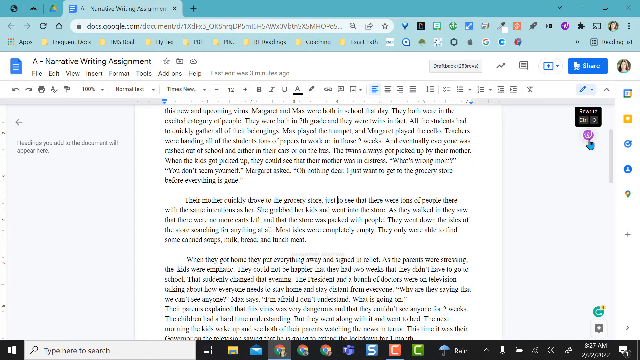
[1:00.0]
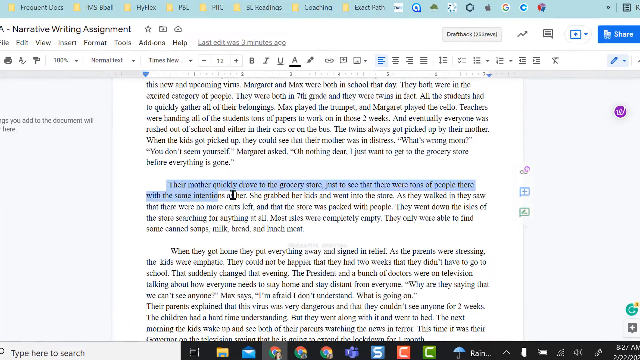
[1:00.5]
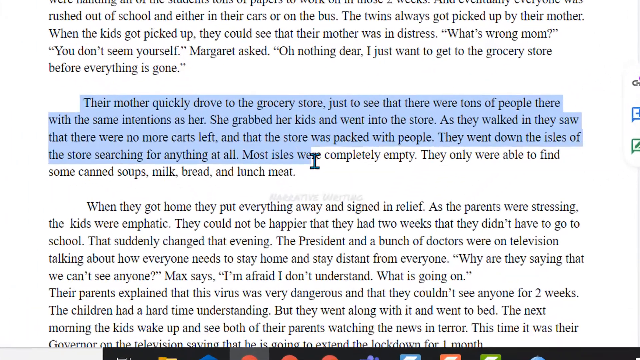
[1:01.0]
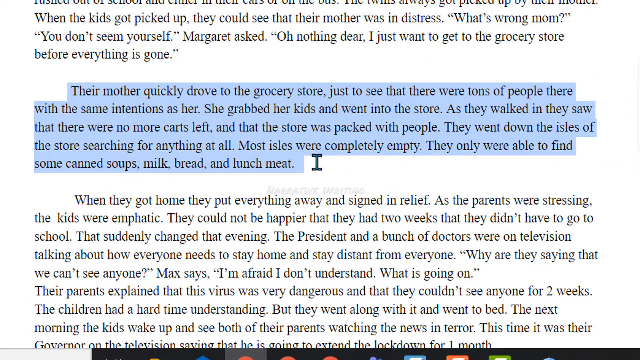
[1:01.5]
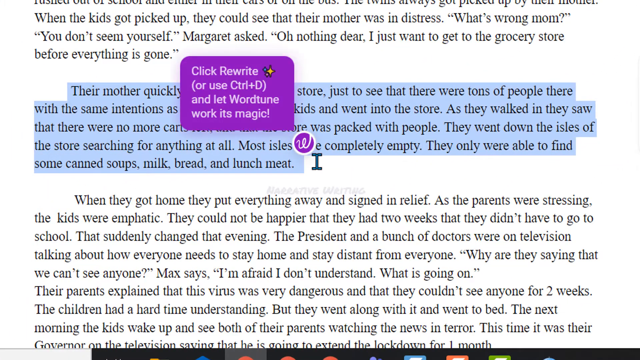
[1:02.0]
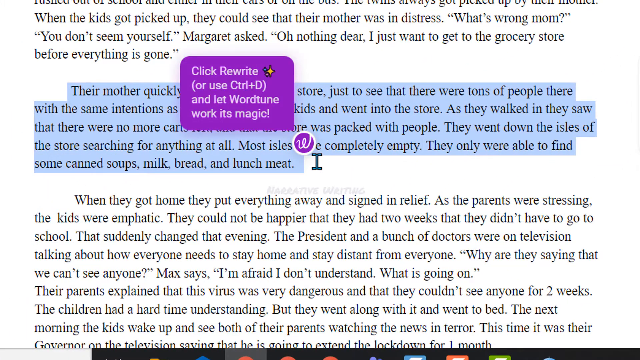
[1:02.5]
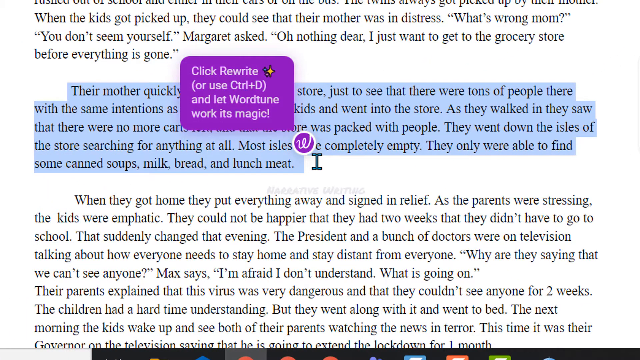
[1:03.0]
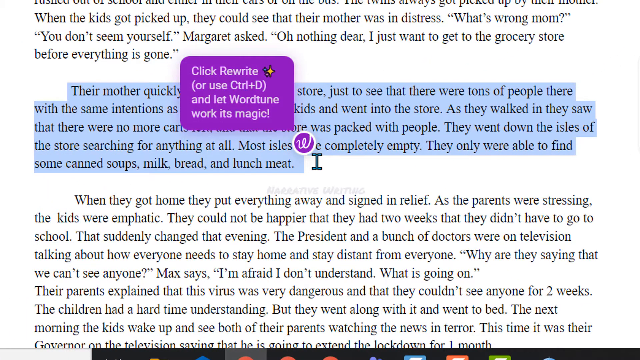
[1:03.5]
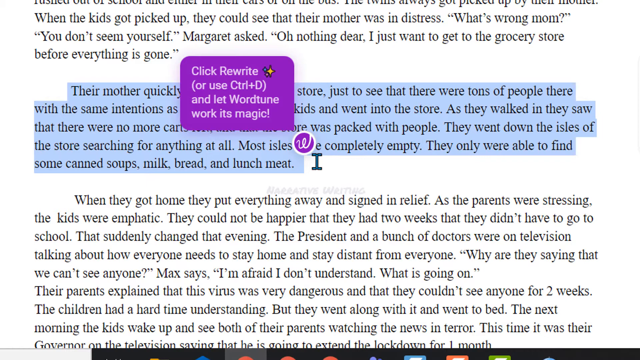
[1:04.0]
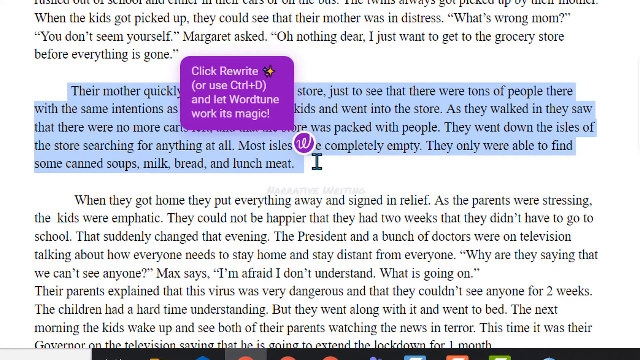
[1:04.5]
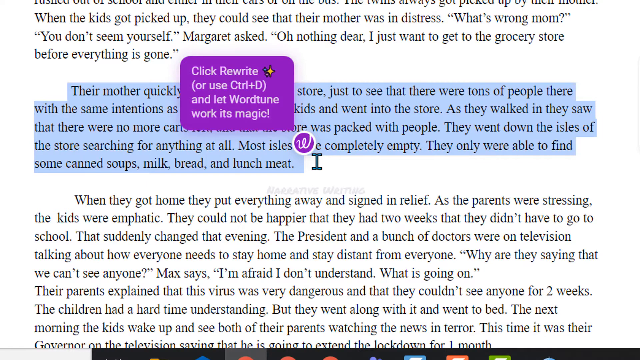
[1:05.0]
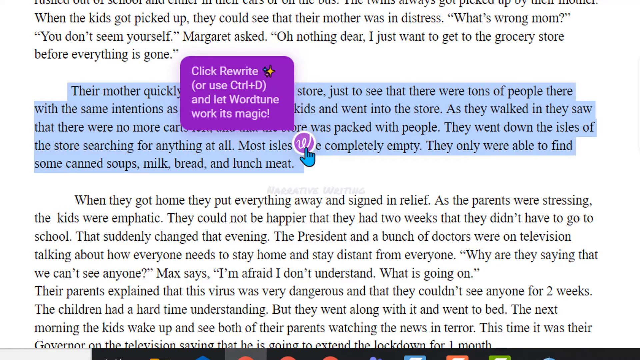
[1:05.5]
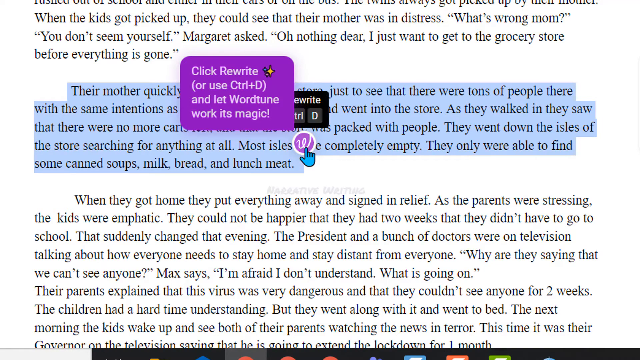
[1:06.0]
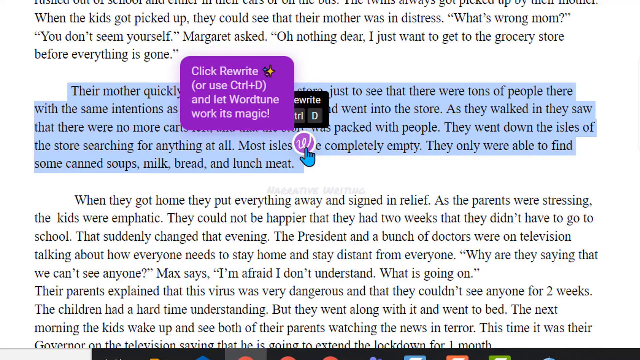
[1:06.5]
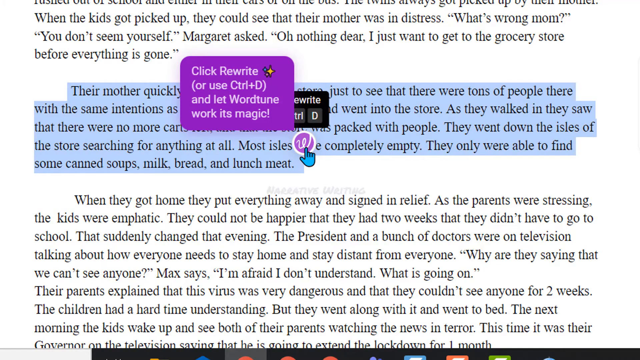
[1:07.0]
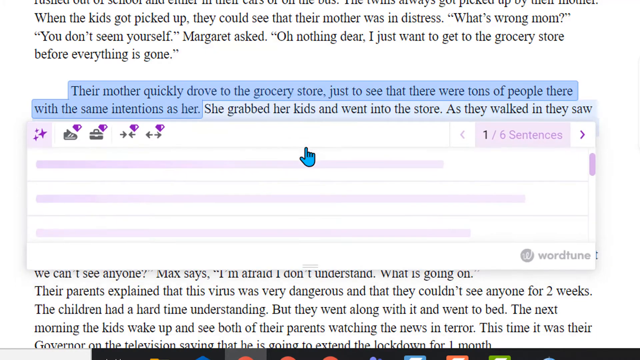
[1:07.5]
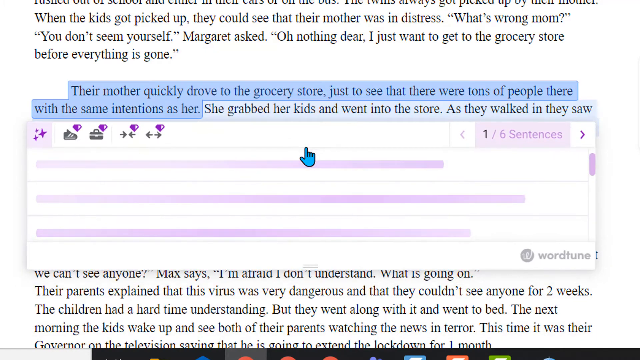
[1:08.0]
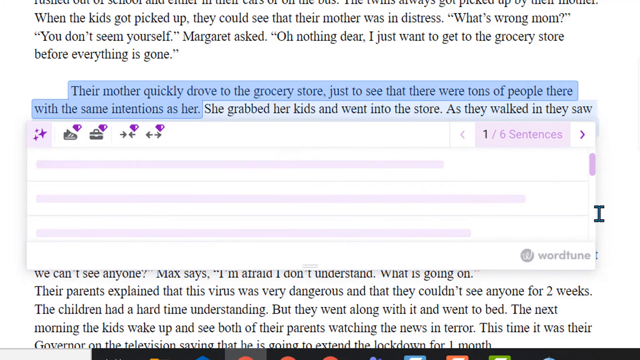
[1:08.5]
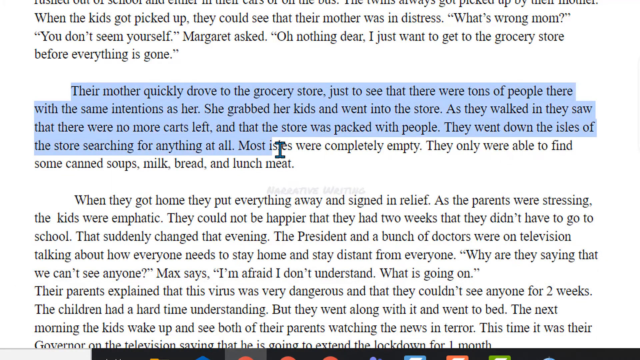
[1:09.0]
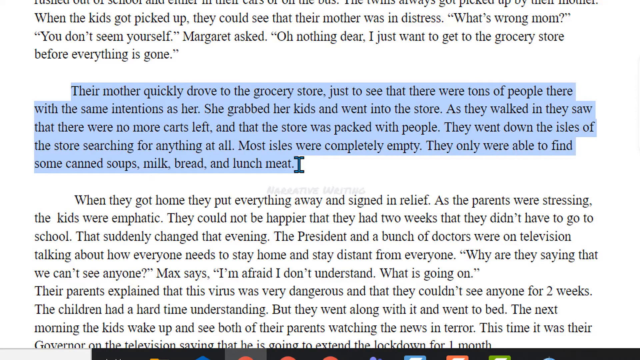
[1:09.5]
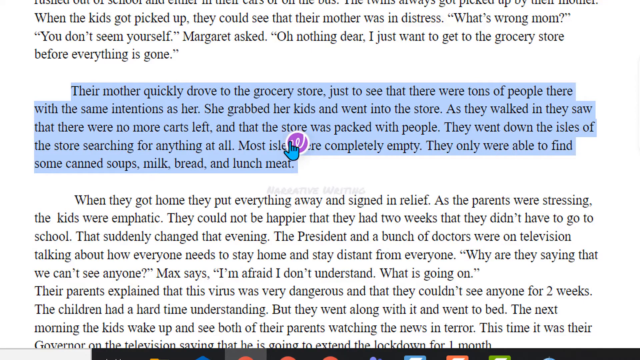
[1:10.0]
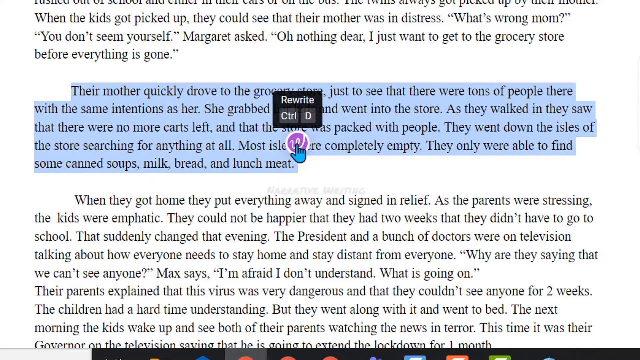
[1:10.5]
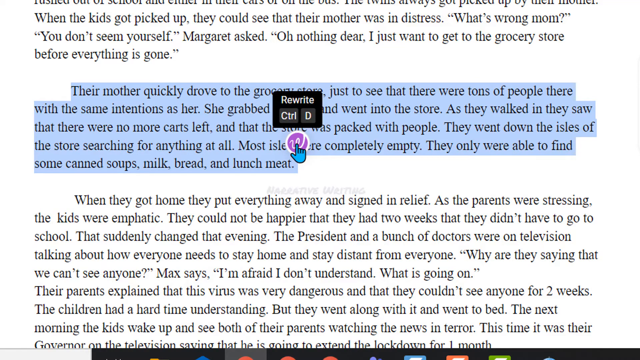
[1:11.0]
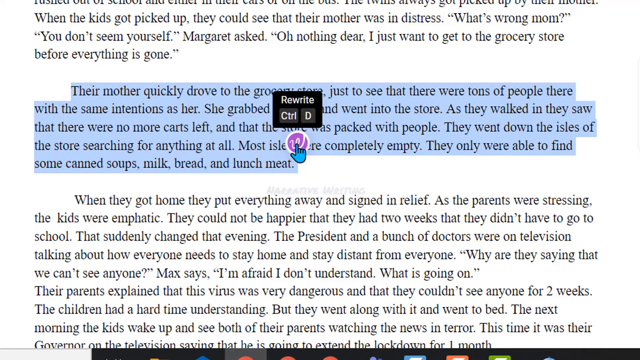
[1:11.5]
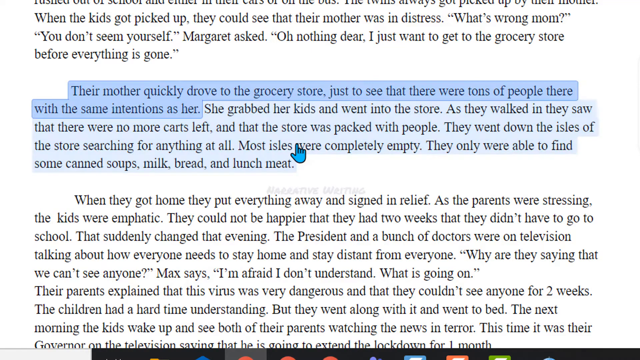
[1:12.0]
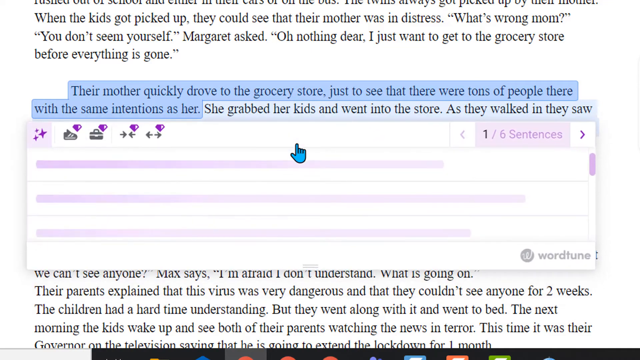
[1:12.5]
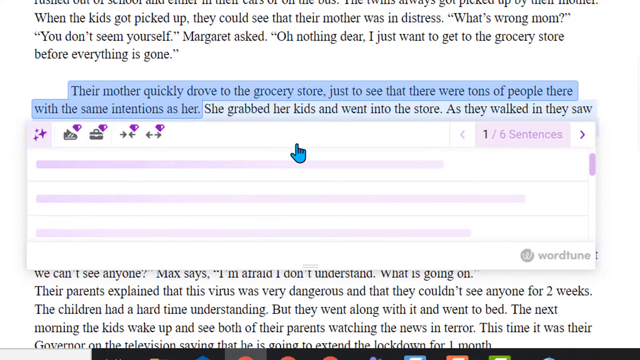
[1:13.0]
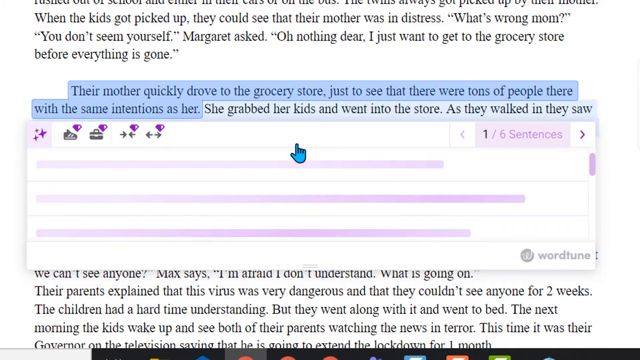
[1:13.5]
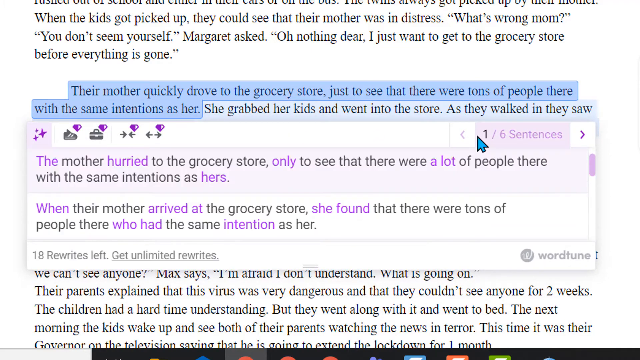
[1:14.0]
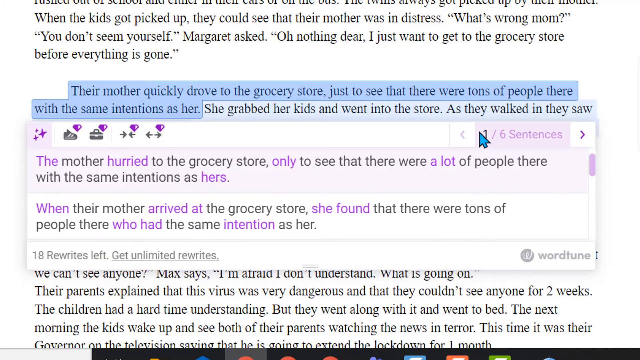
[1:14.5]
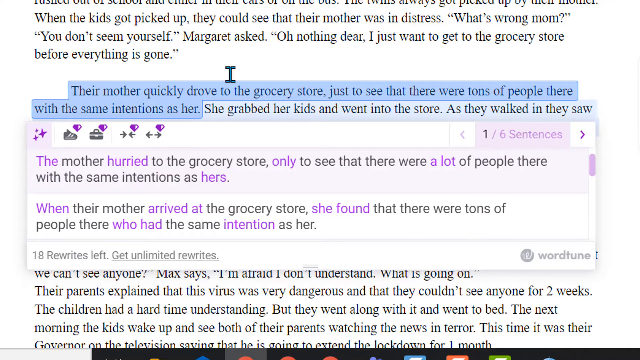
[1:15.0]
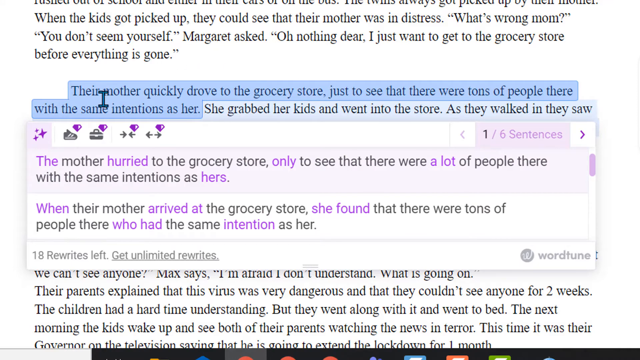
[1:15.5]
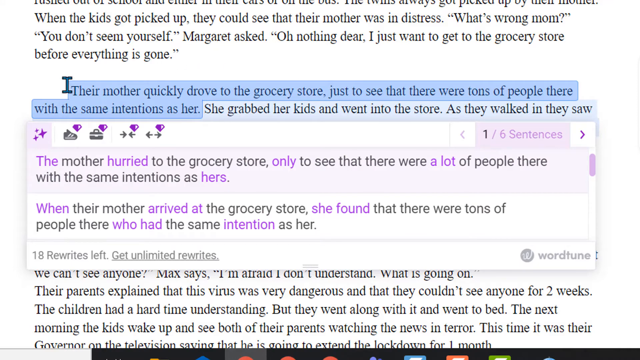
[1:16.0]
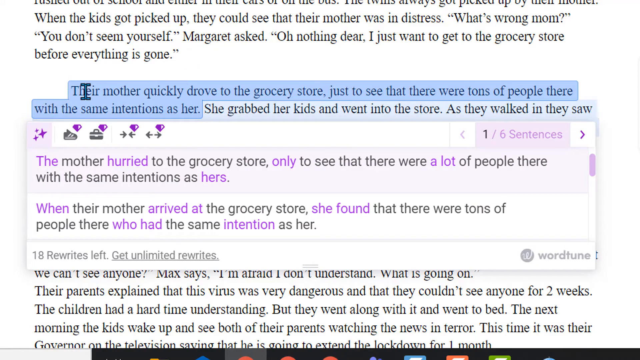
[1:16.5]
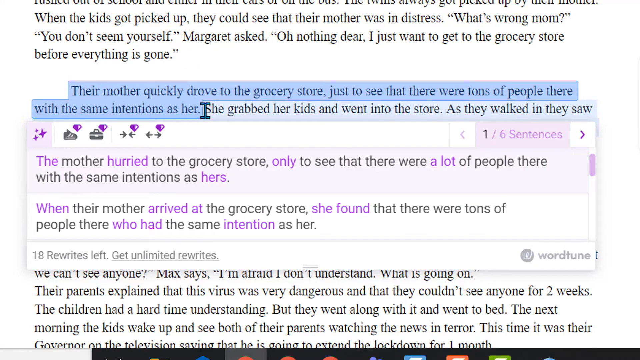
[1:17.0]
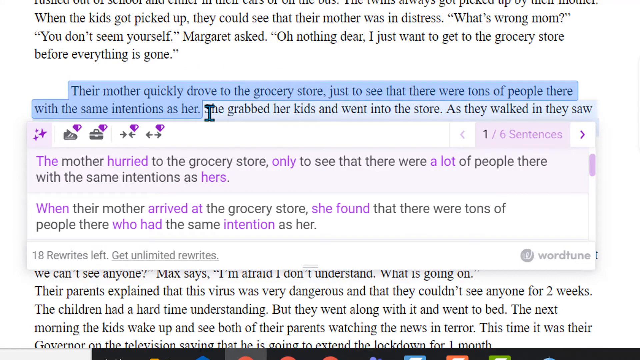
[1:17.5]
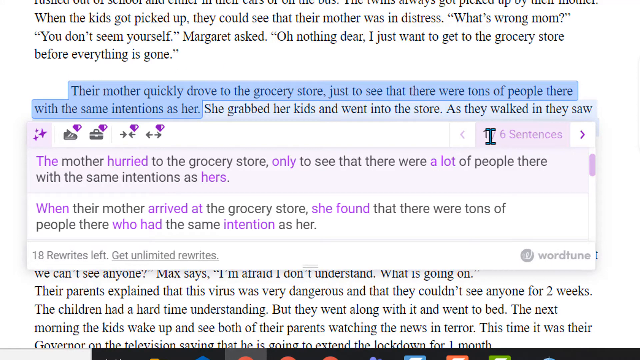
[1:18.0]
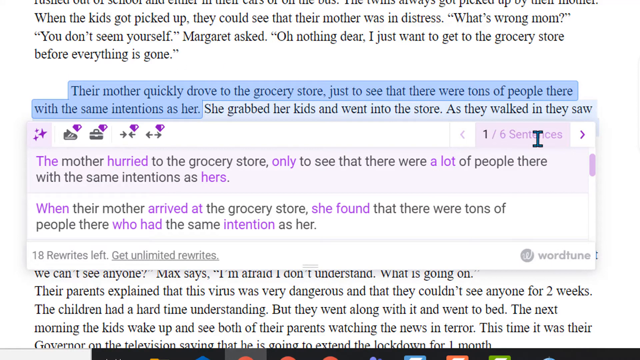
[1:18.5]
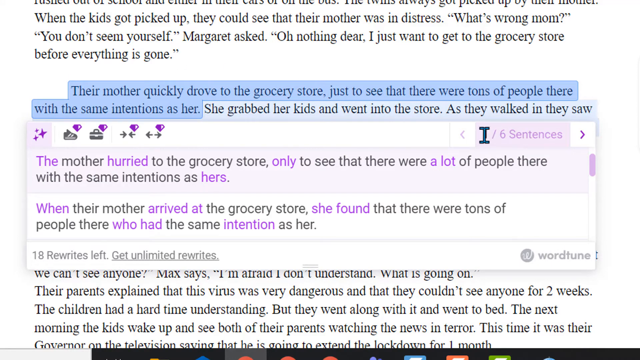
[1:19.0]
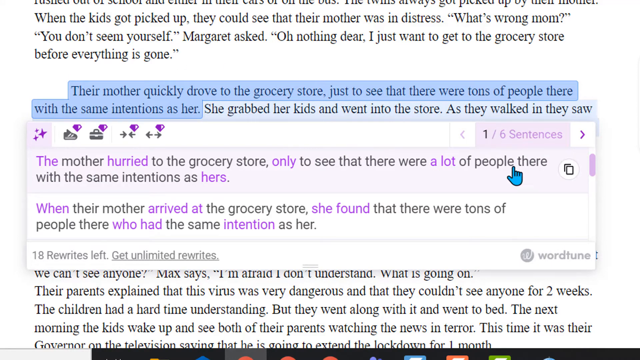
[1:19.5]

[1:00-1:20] A narrative paper is shown in a zoomed-in view. An extension has offered a suggestion on how a highlighted paragraph can be altered. A purple pop-up states "click rewrite or use Control plus D and let WordTune work its magic," while the other two paragraphs are not highlighted in any way. The user clicks on the logo, which is a W, and suggested rewrites appear in a separate box below. The narrative is on a white background in black text, the highlighted paragraph has a blue background, and the suggested rewrites are in pink. The suggested edits stand out with bright colors, while all the other text is black on white.